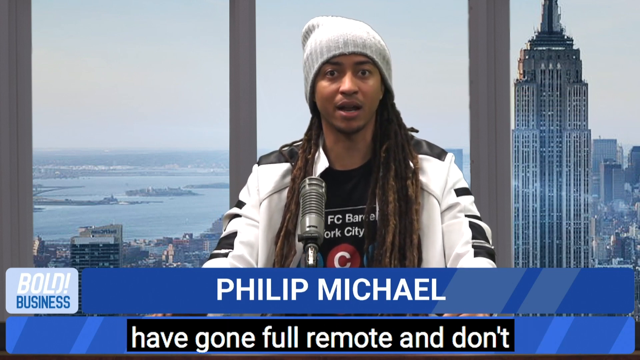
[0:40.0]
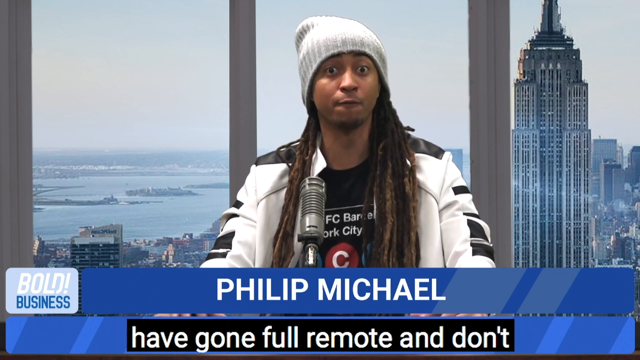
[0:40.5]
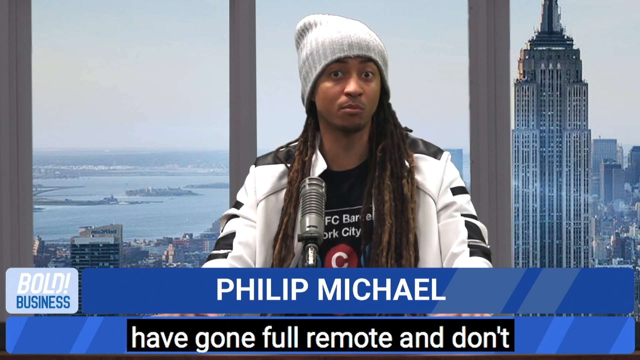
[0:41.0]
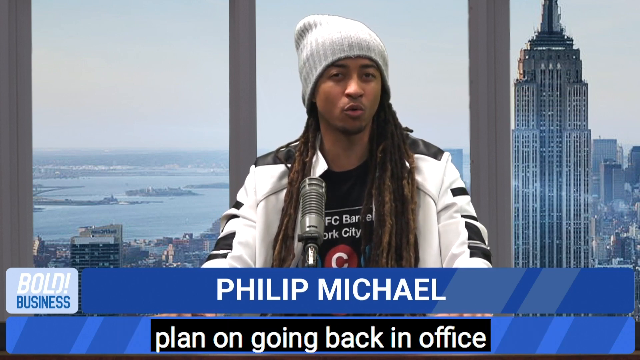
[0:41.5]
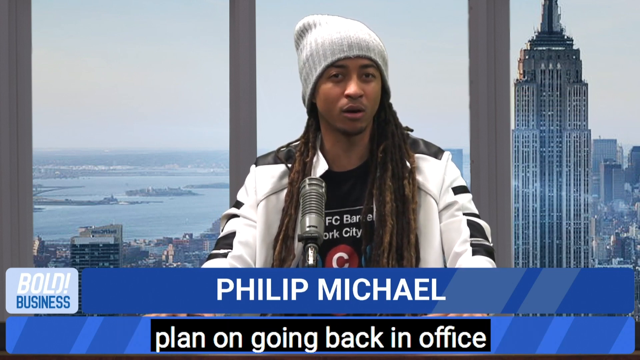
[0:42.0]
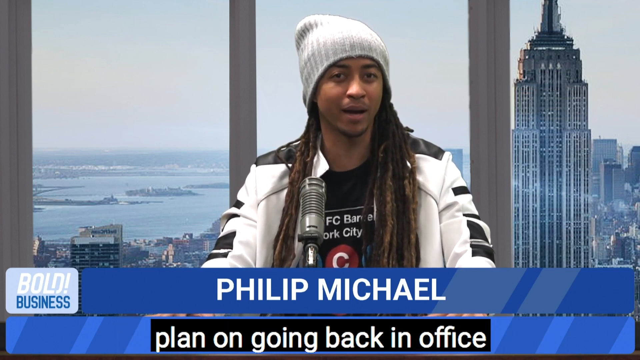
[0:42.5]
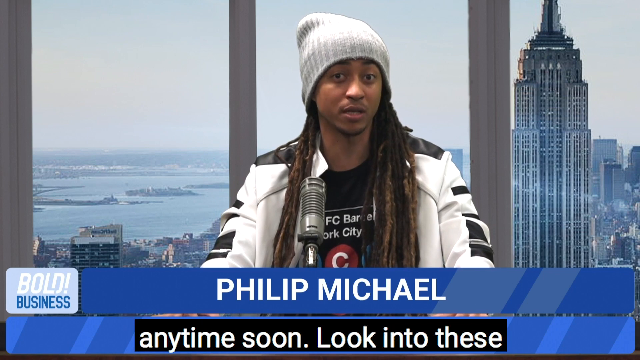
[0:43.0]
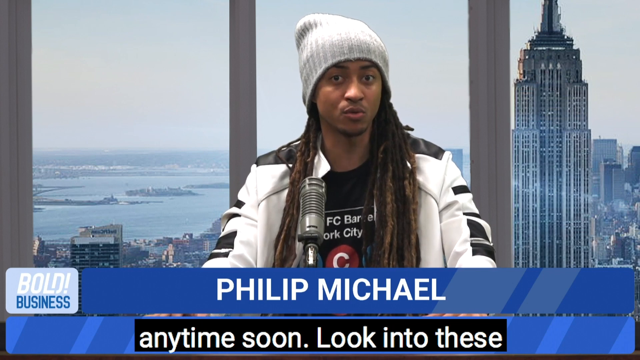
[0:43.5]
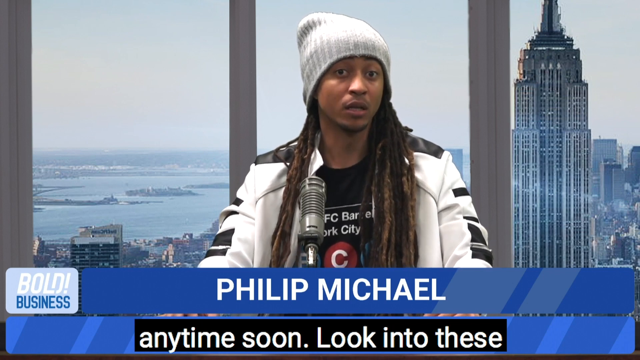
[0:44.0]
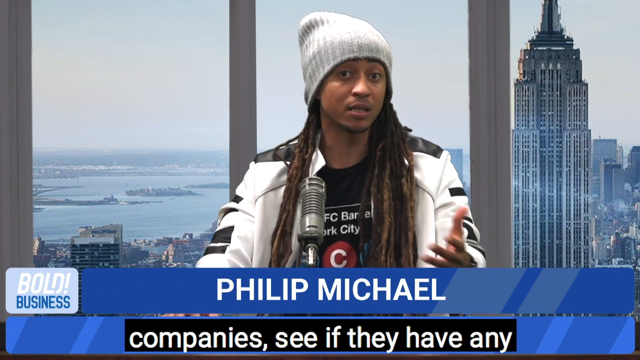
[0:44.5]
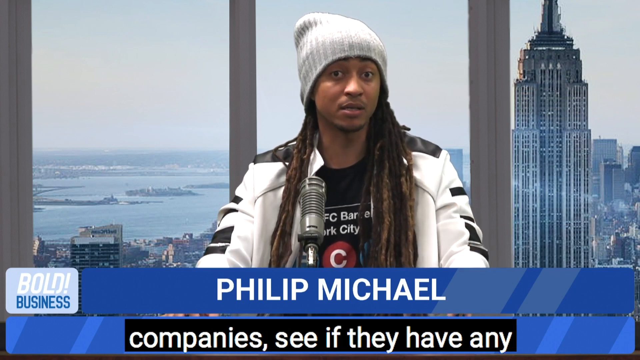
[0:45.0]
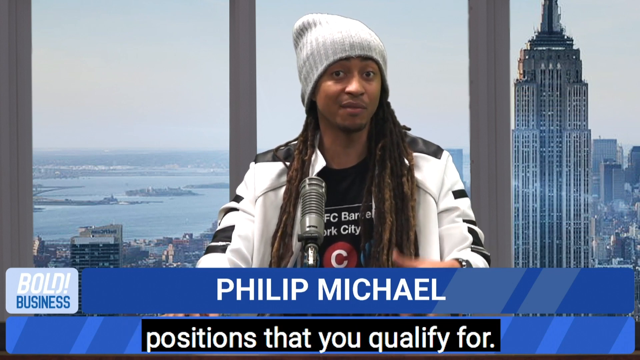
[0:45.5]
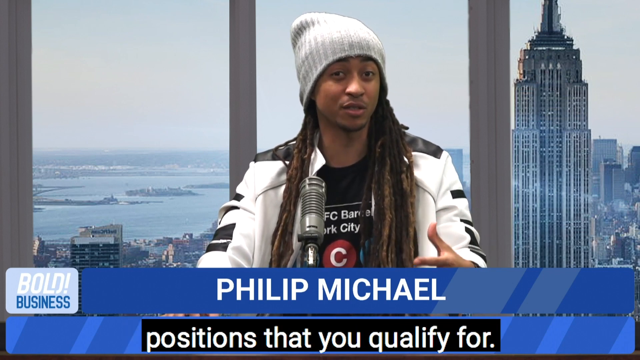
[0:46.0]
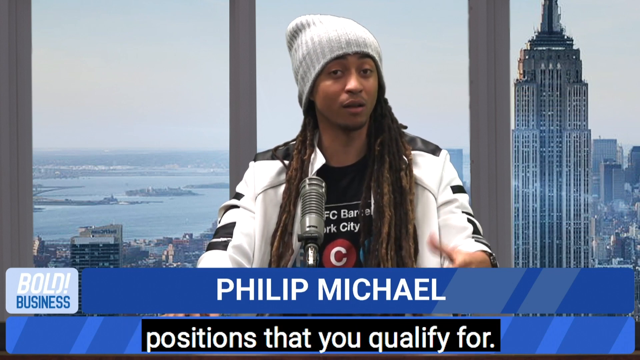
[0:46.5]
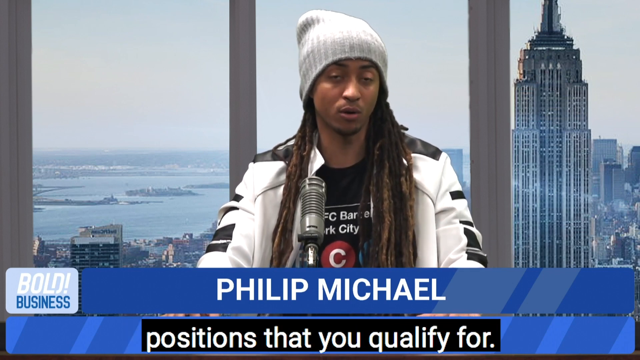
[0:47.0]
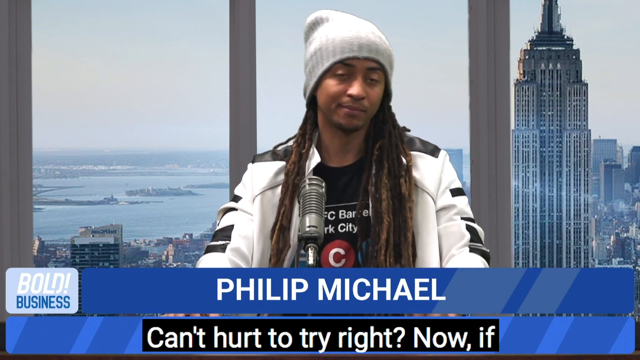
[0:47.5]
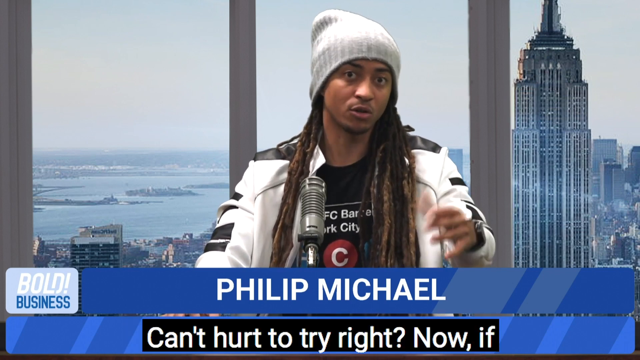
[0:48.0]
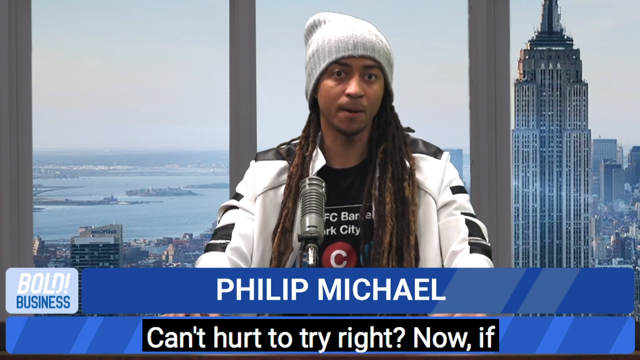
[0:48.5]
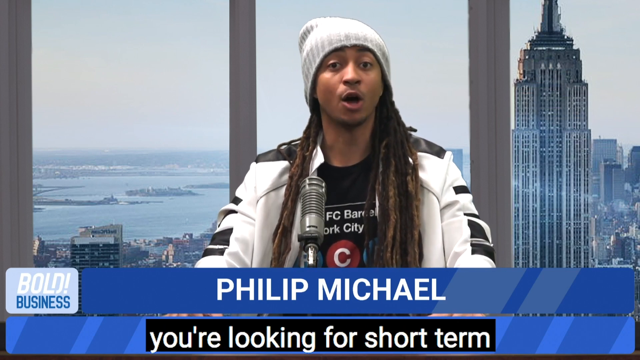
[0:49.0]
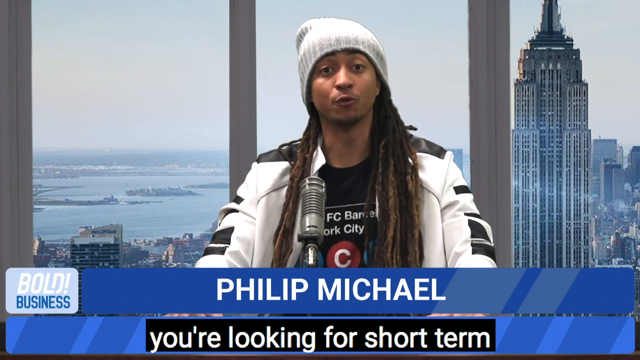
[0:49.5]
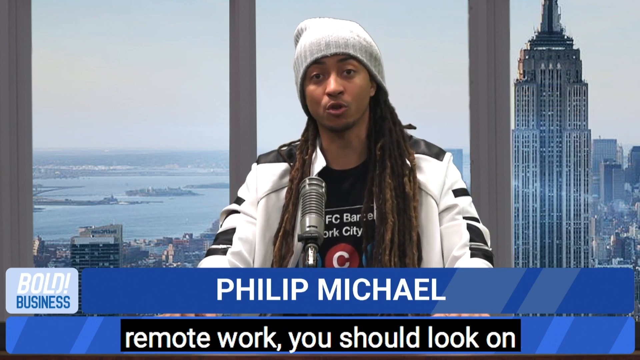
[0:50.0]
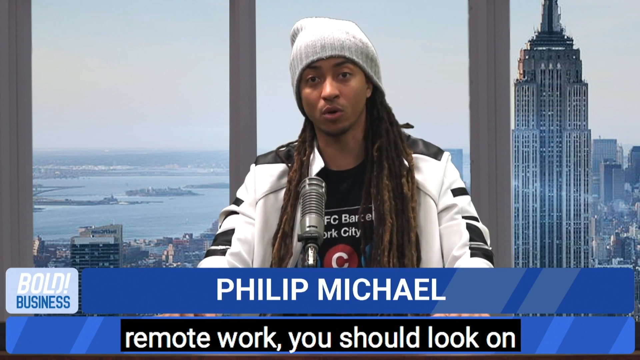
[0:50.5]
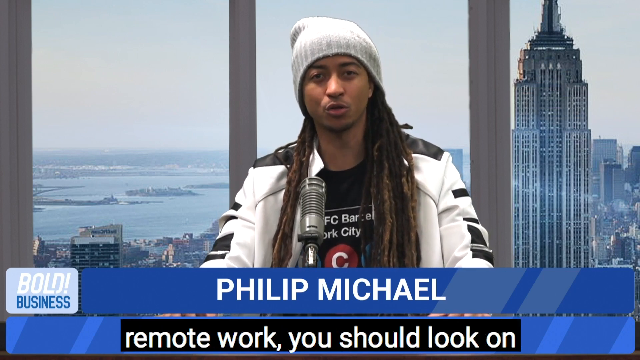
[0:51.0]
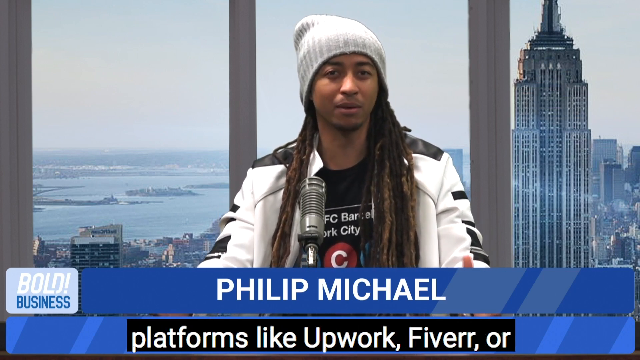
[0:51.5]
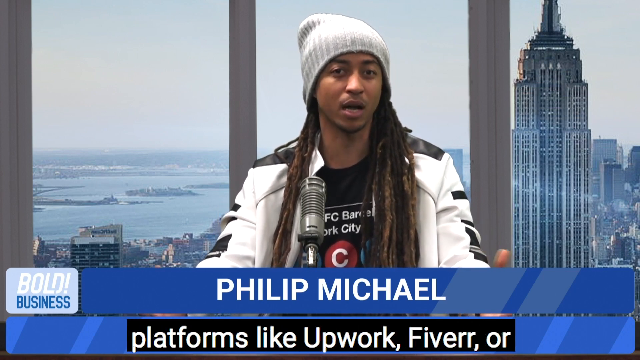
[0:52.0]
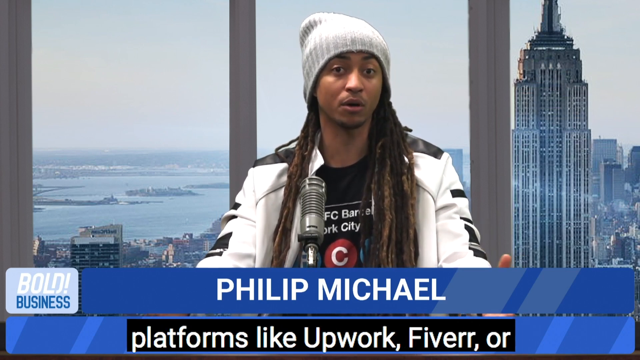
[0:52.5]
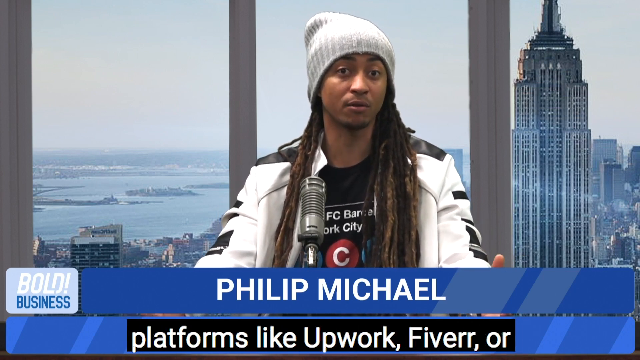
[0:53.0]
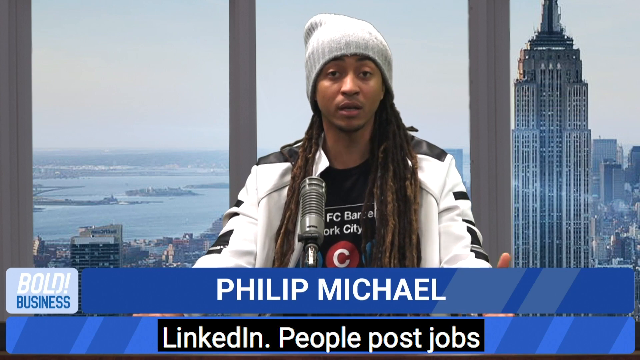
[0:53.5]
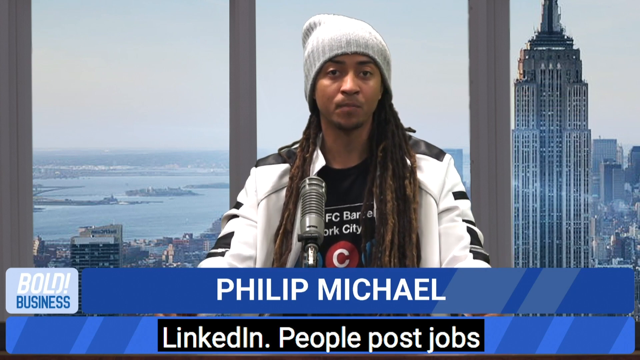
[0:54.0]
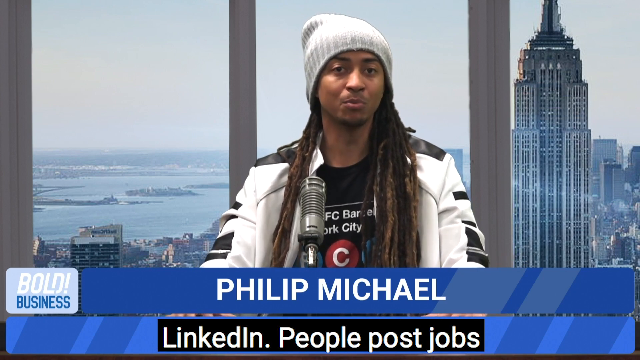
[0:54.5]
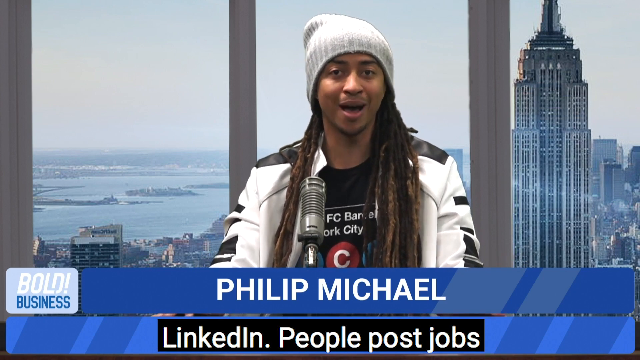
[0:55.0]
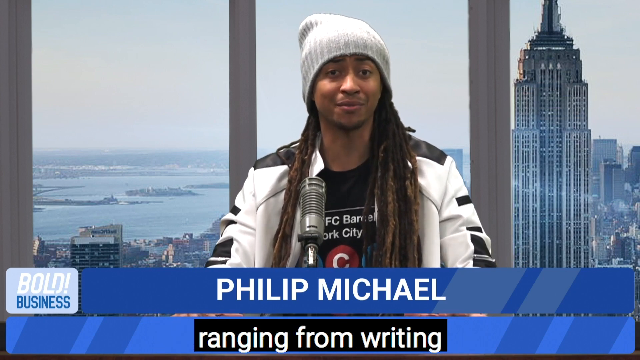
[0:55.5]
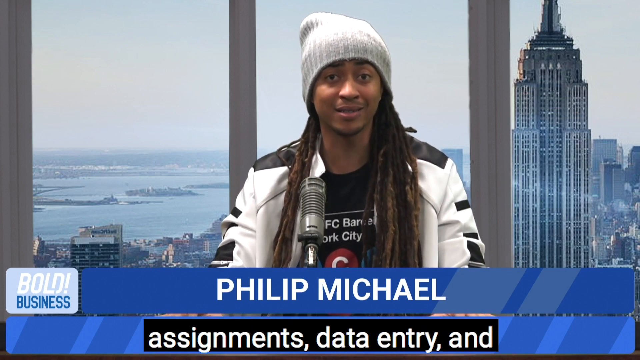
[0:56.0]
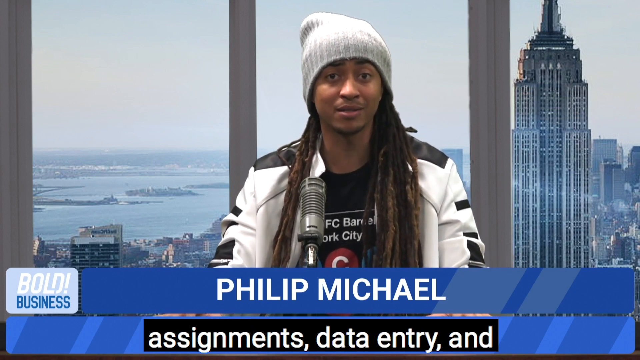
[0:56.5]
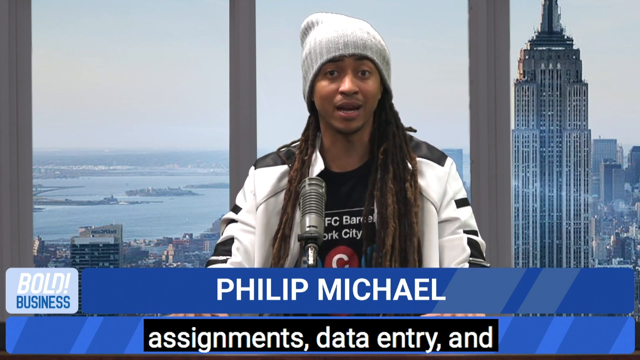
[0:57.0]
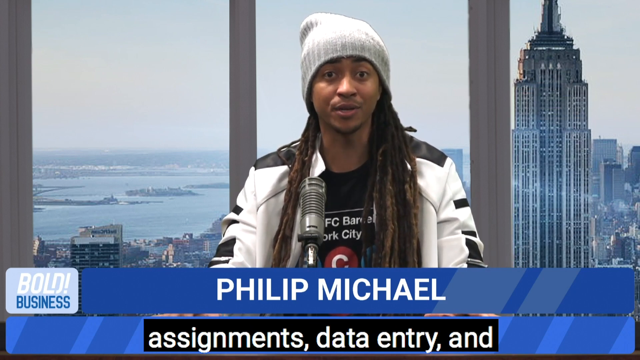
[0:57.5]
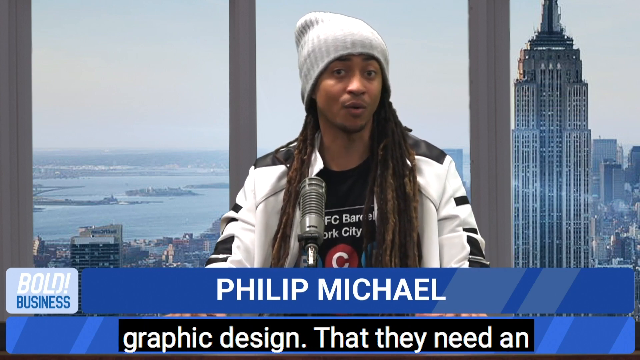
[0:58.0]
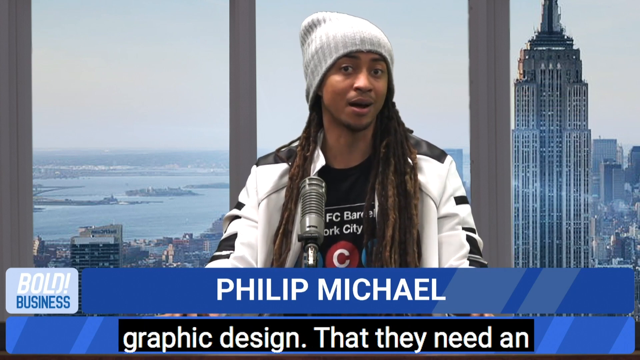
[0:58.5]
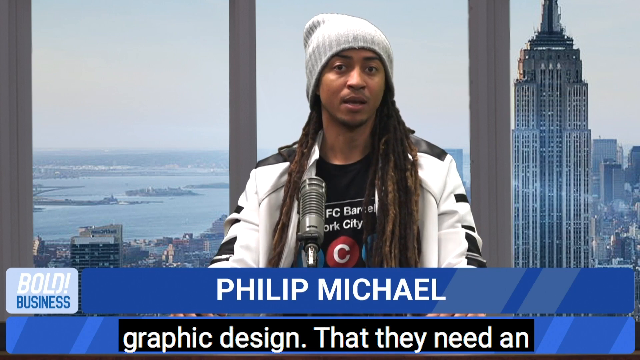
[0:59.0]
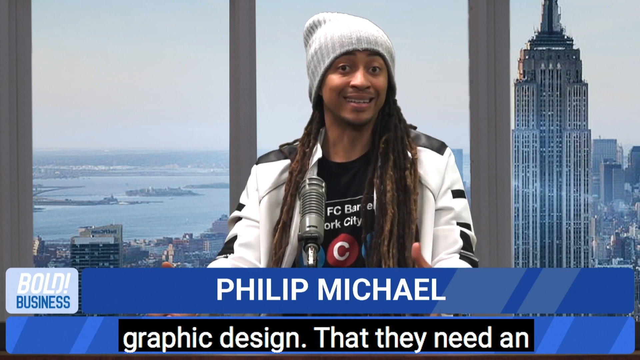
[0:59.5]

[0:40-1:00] The host, Philip Michael, has large brown eyes and a very wide-eyed, alert look. He looks directly into the camera, squinting his eyes as if making direct eye contact with his audience. He gestures with his hands, raises his eyebrows as he speaks and tilts his head to the side, and appears to have a genuine look. A standard microphone is sitting on the desk in front of him; it is silver and looks like a high-quality microphone. He has dark brown dreads and appears to have some blonde highlights in them.